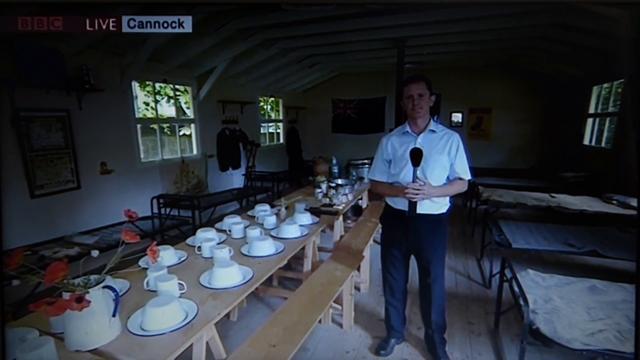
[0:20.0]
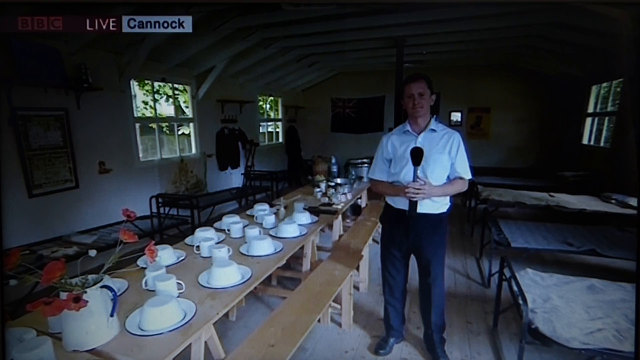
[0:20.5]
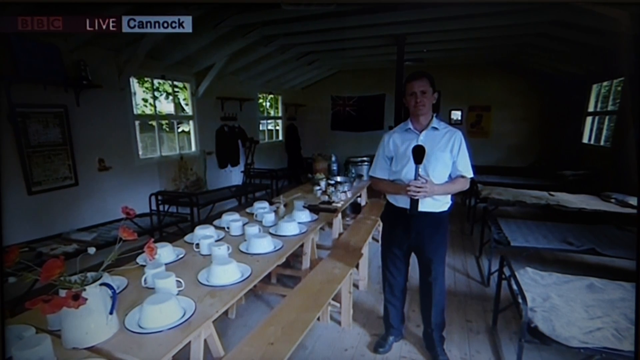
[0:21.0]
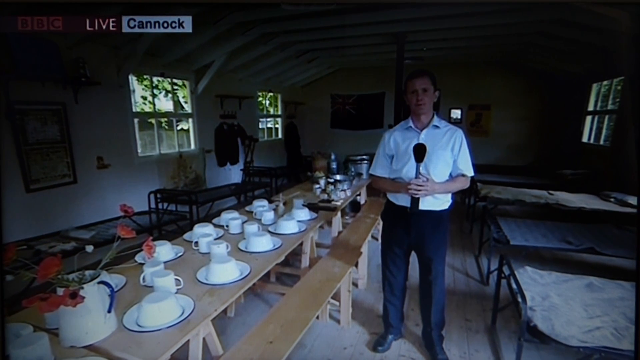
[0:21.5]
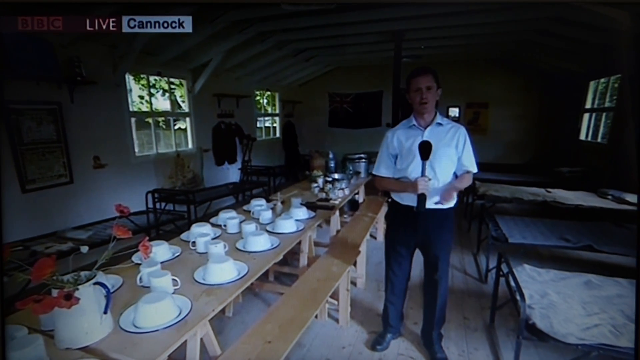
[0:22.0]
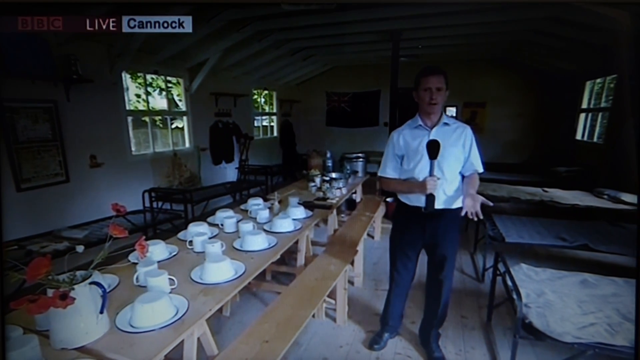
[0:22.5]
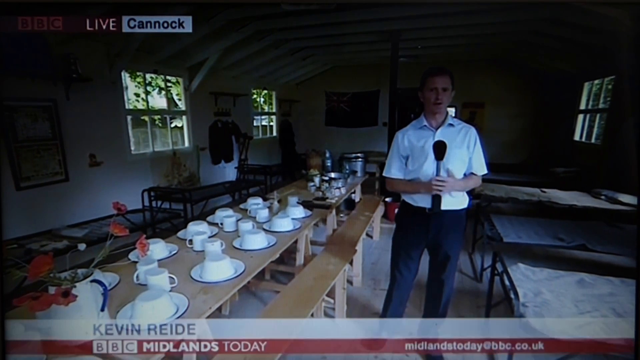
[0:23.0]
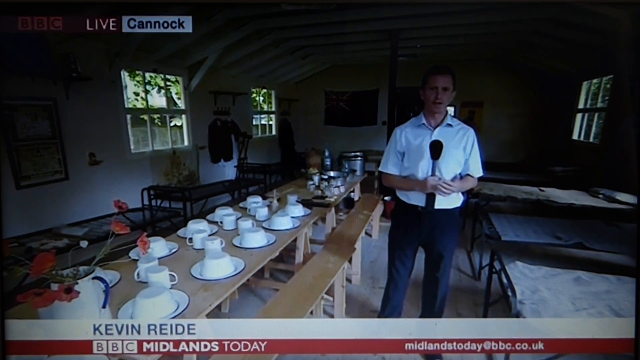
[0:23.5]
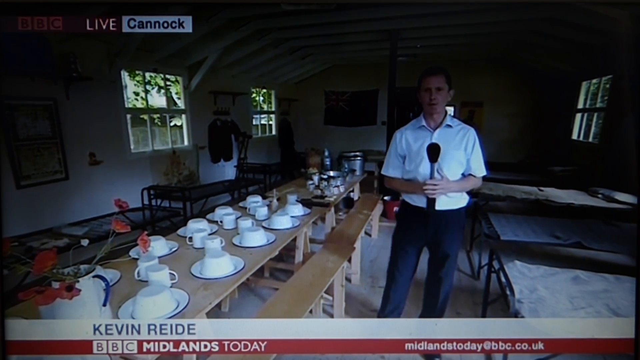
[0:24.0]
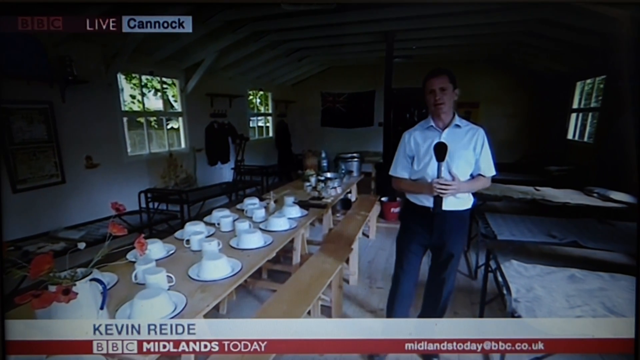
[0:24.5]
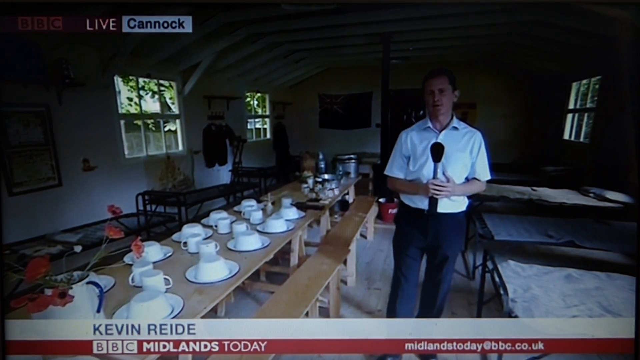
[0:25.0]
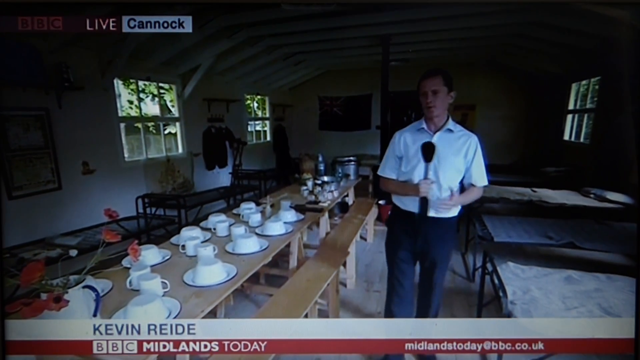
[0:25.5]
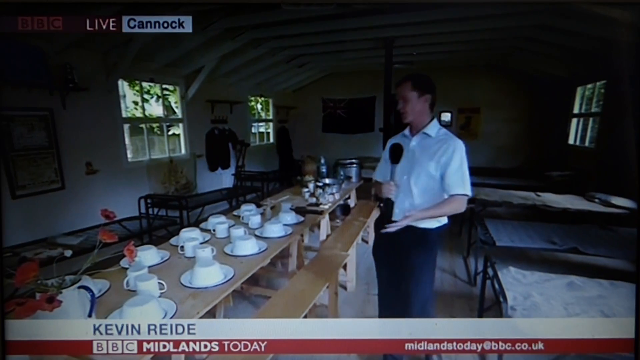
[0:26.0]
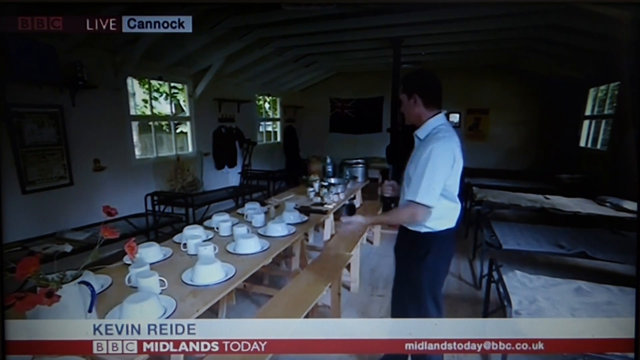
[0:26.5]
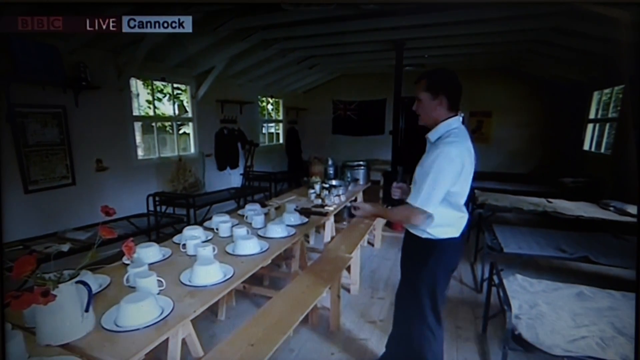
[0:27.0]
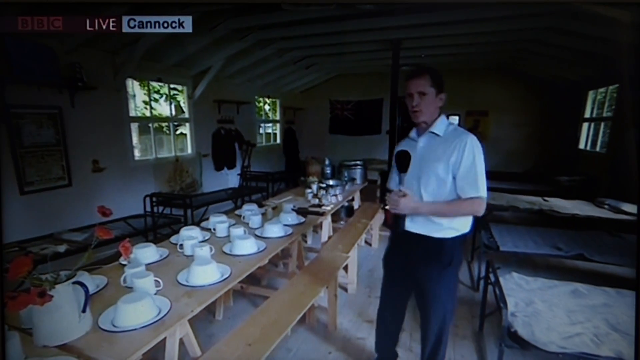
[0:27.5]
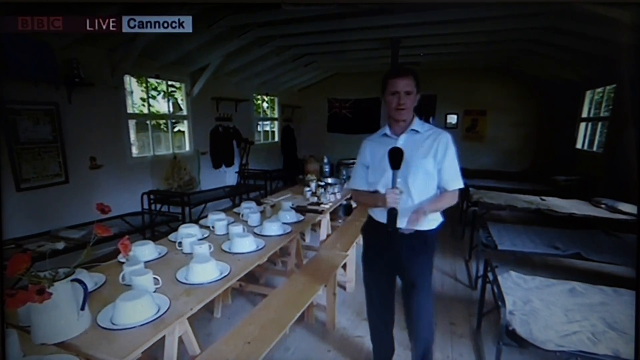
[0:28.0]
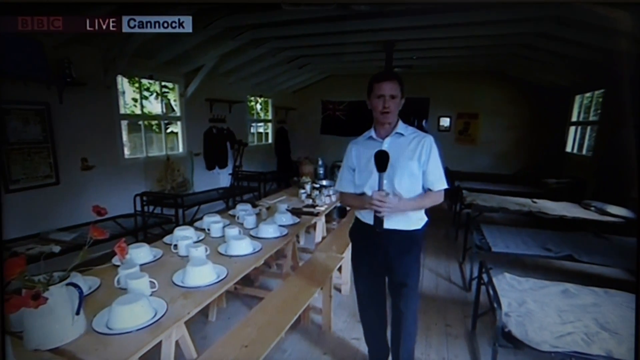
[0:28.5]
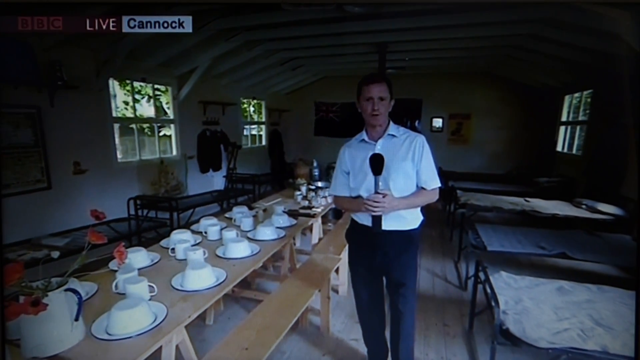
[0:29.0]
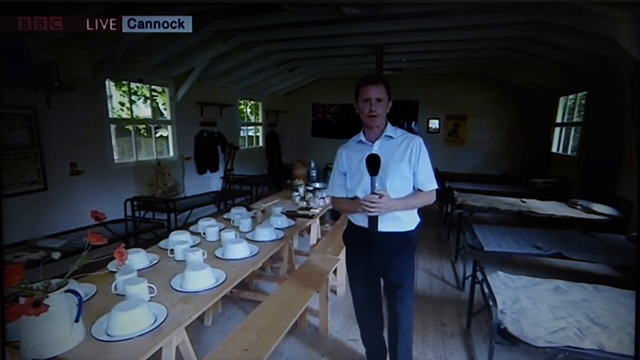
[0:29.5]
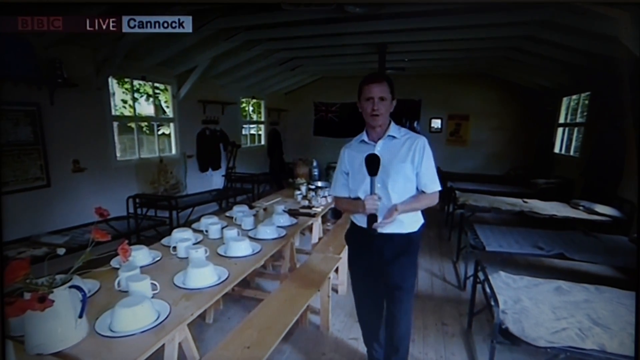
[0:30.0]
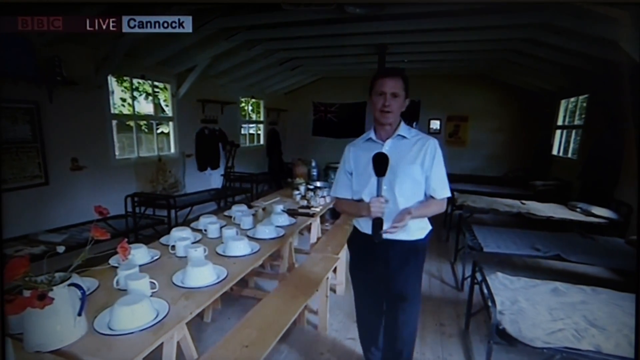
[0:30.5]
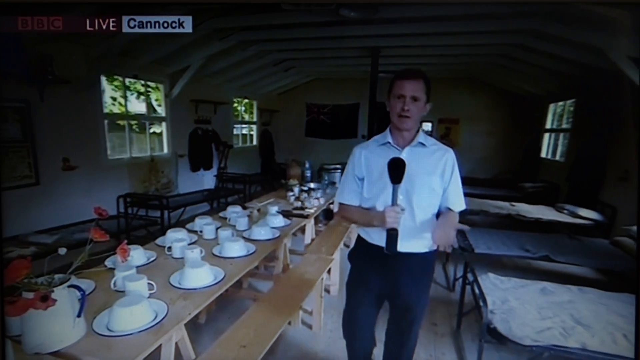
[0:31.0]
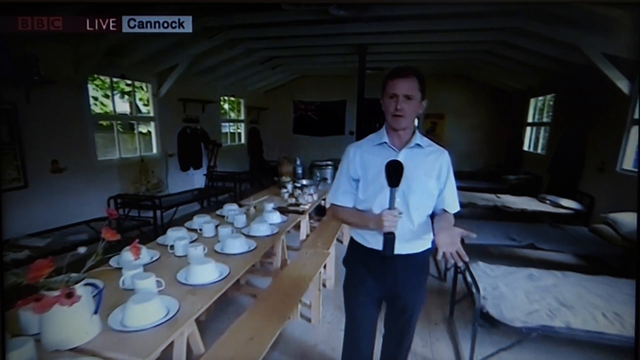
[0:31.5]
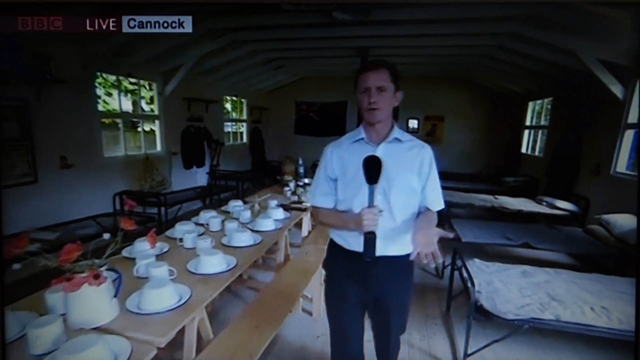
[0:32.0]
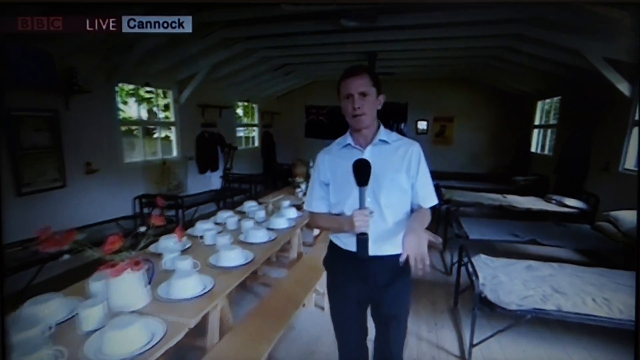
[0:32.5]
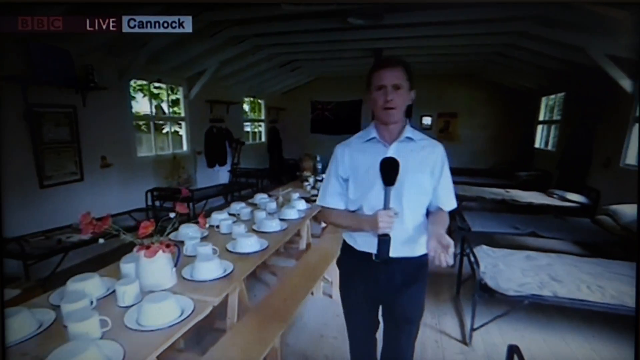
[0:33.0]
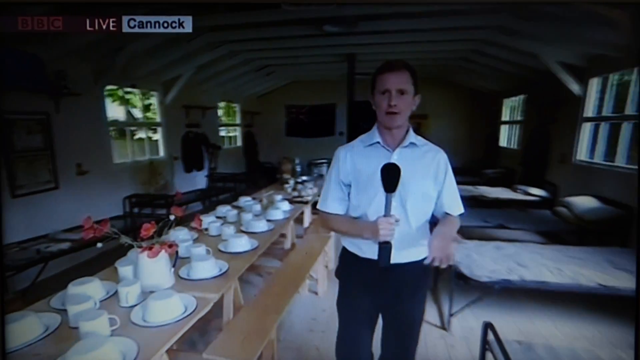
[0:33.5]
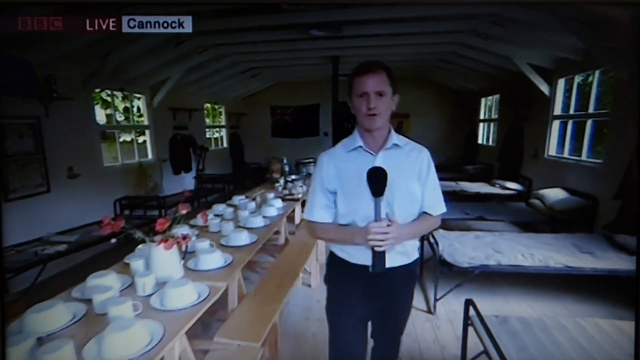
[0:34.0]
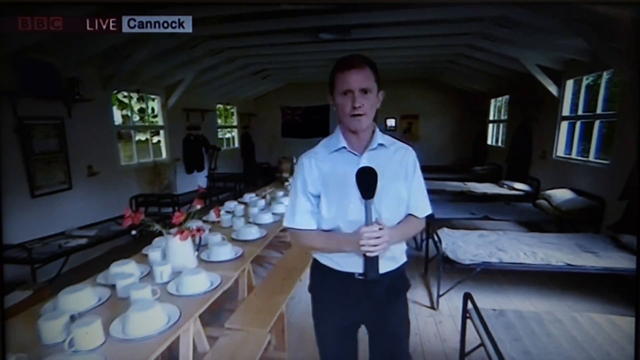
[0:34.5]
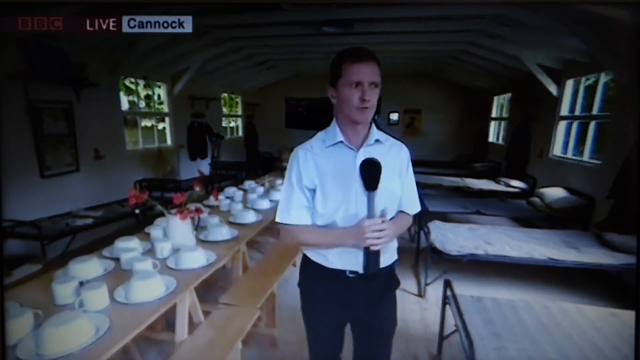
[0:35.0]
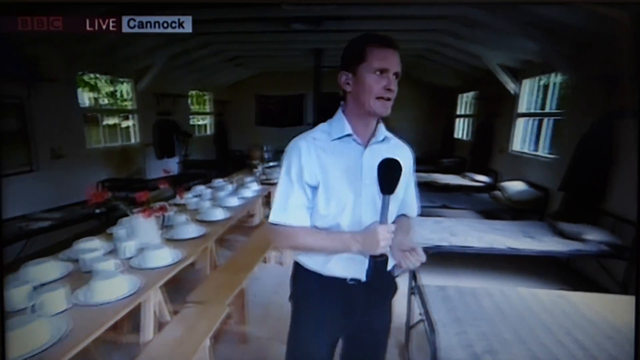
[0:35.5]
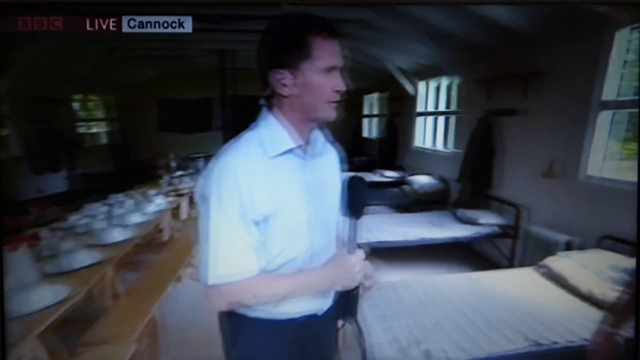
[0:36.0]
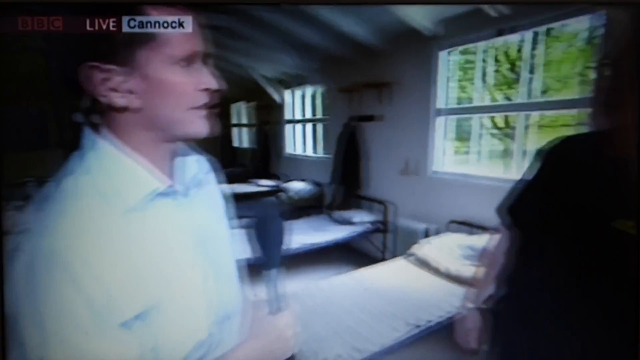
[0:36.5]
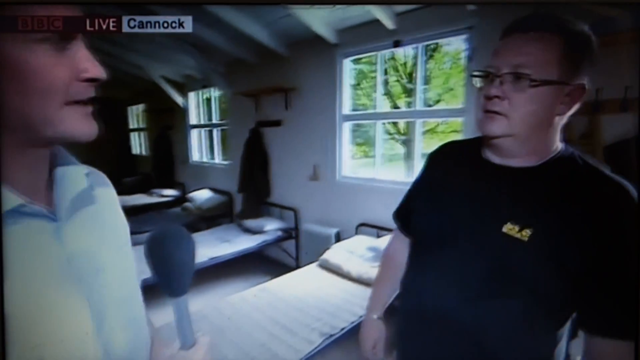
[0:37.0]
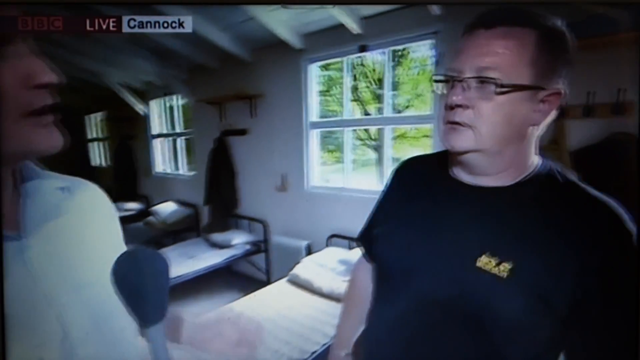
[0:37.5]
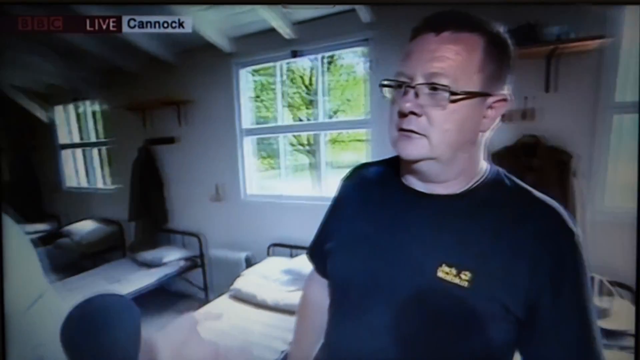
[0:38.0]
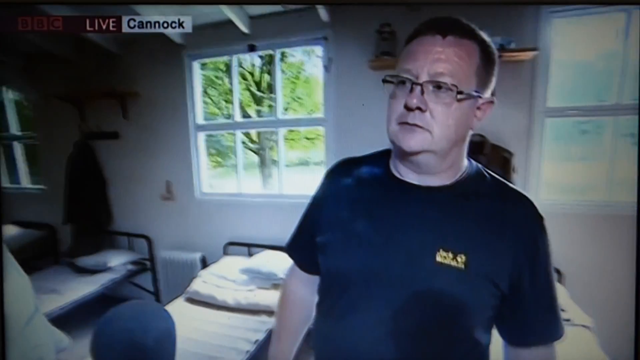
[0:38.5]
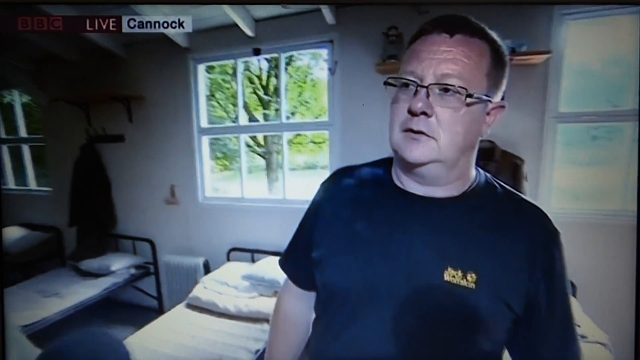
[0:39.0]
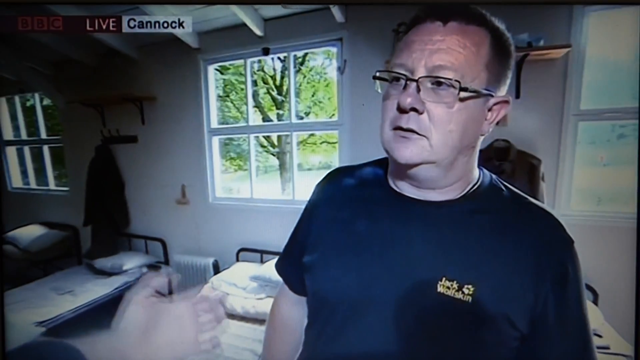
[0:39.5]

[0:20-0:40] A male presenter is possibly at a campsite or building where soldiers used to sleep, eat and bathe. He has short black hair, is light-skinned, and wears a short-sleeve shirt with blue suit trousers, holding a mic with both hands. The building has no curtains and its walls are white. On a brown wooden table there are white plates, white coffee mugs and a white bowl, and the chairs attached to the table are also made of wood.